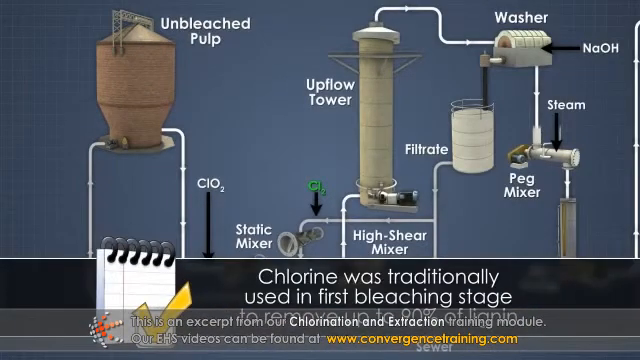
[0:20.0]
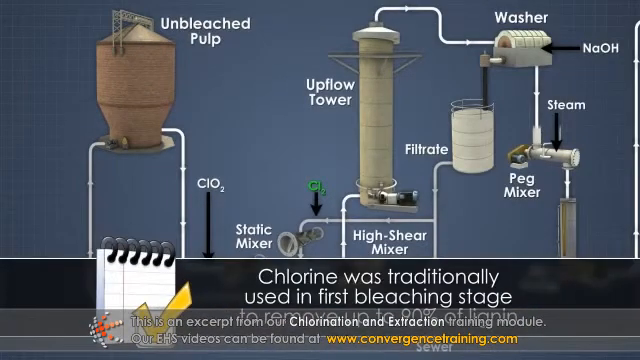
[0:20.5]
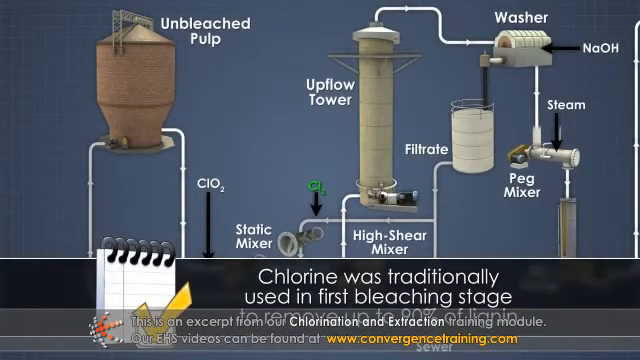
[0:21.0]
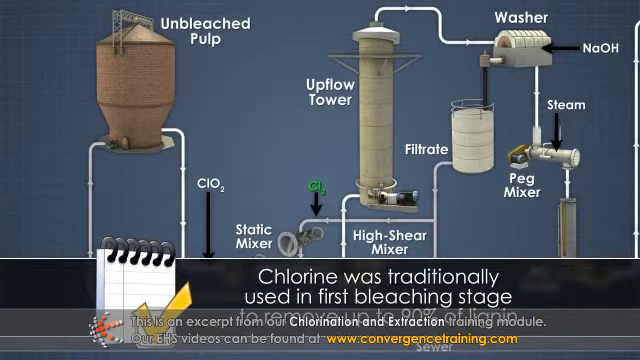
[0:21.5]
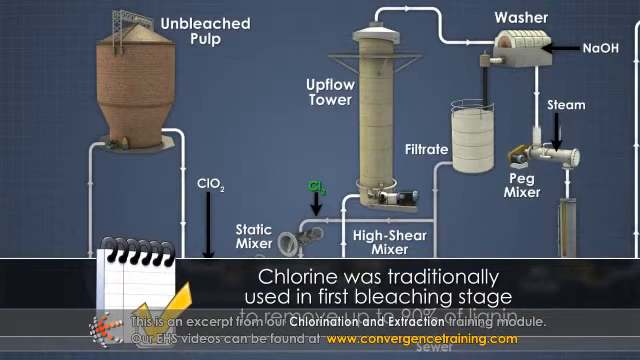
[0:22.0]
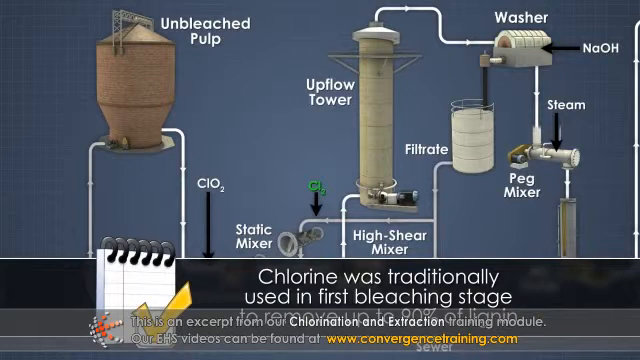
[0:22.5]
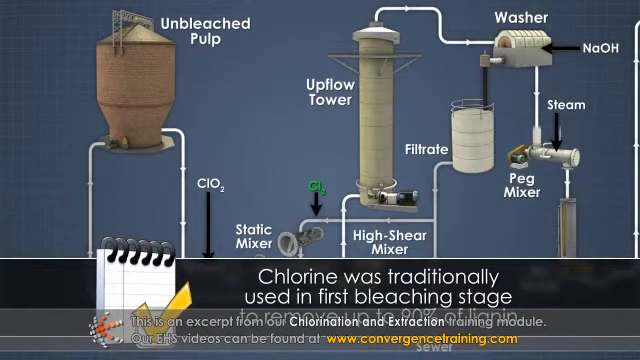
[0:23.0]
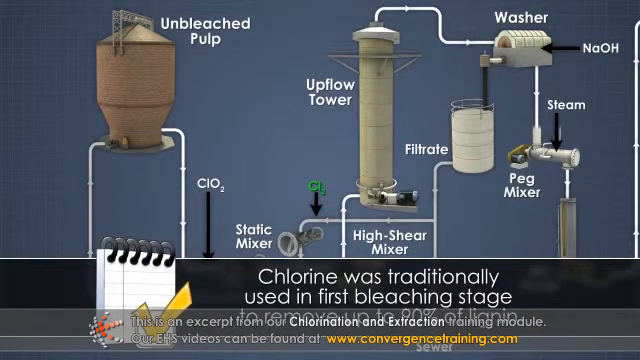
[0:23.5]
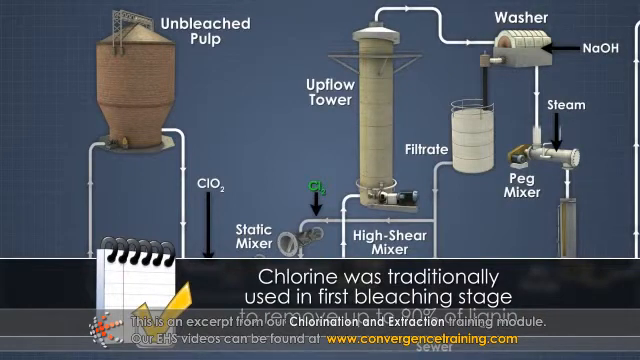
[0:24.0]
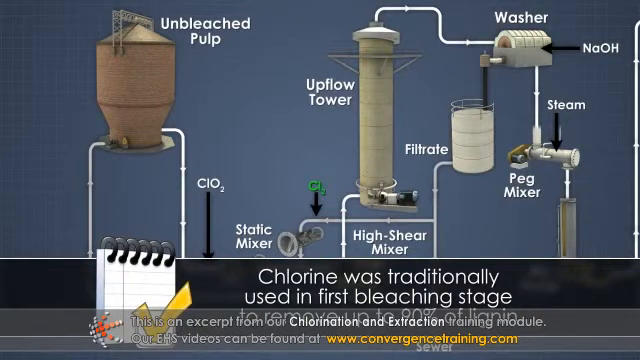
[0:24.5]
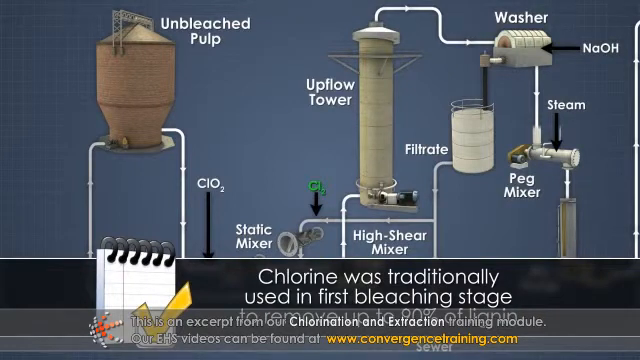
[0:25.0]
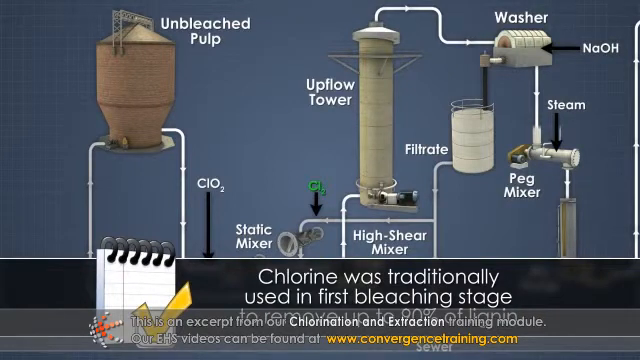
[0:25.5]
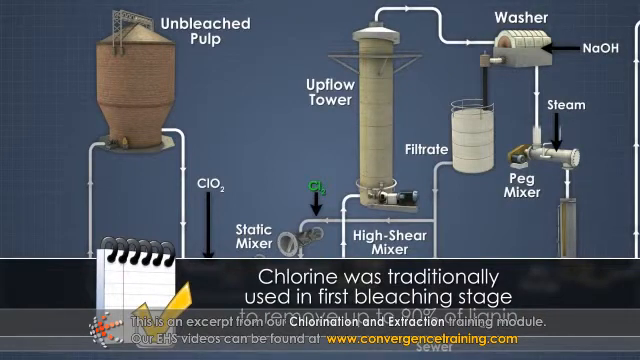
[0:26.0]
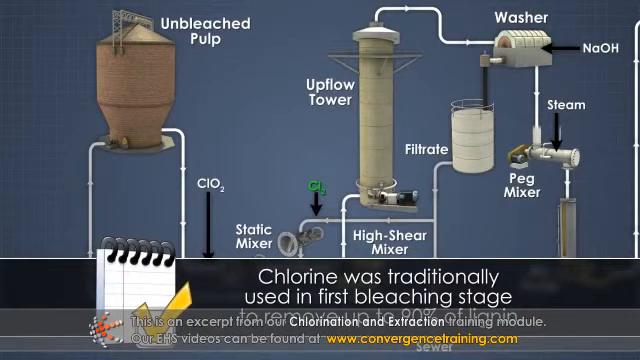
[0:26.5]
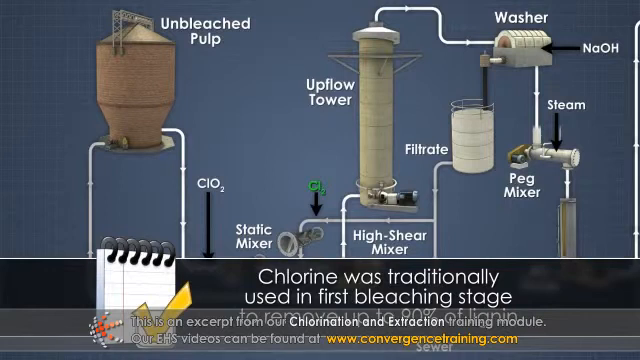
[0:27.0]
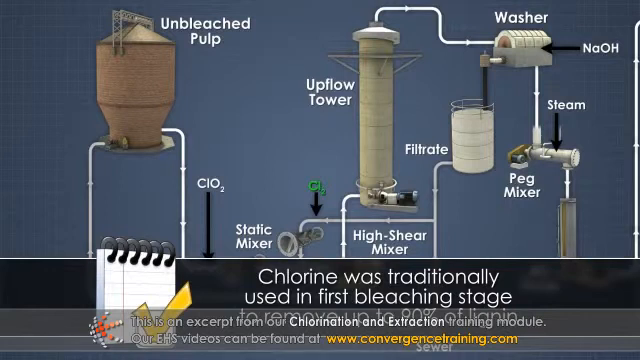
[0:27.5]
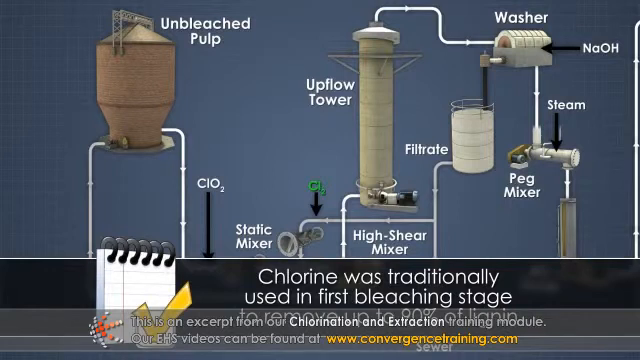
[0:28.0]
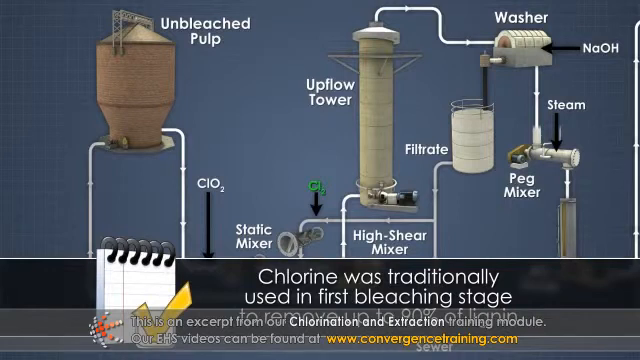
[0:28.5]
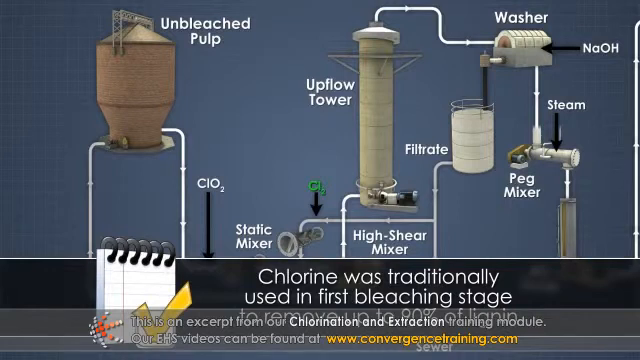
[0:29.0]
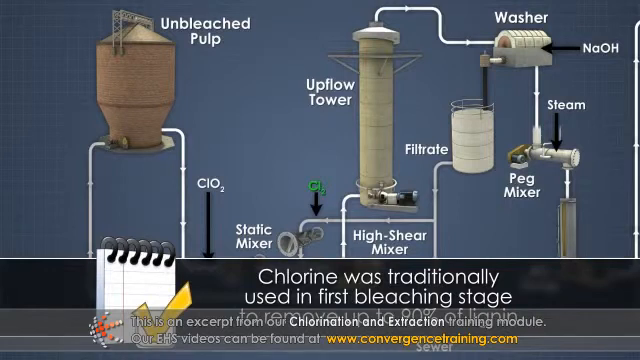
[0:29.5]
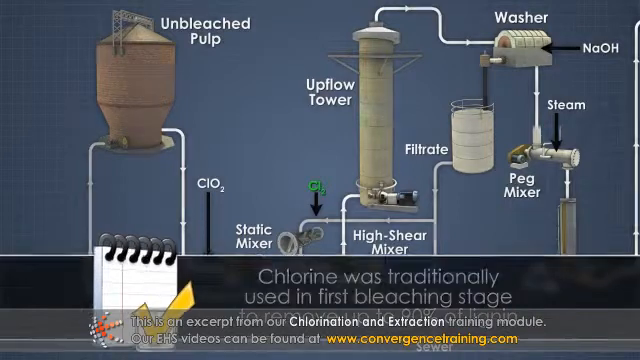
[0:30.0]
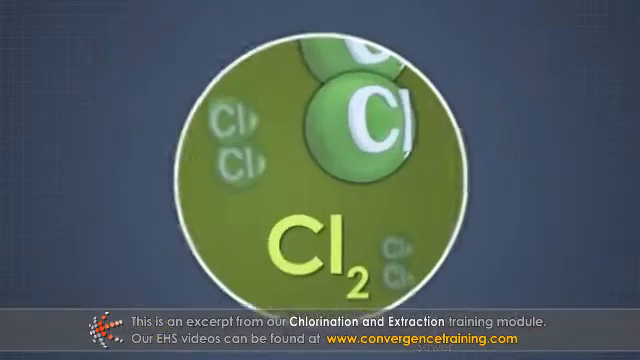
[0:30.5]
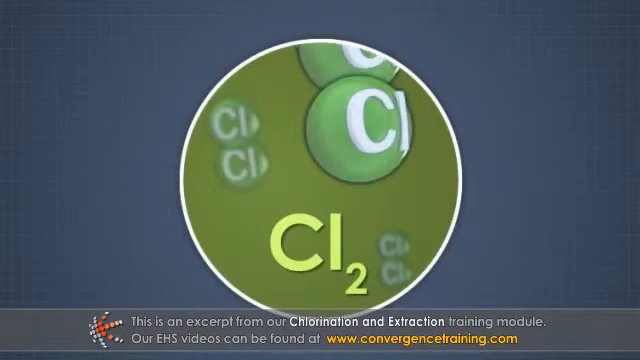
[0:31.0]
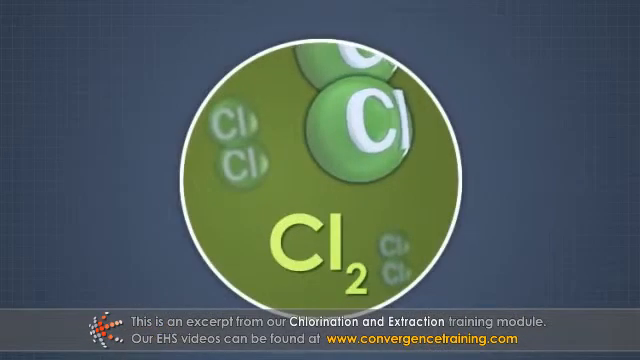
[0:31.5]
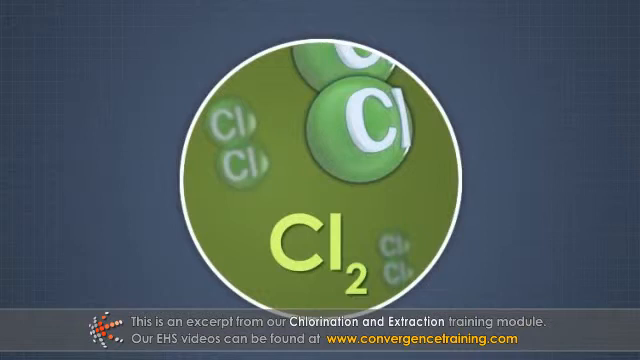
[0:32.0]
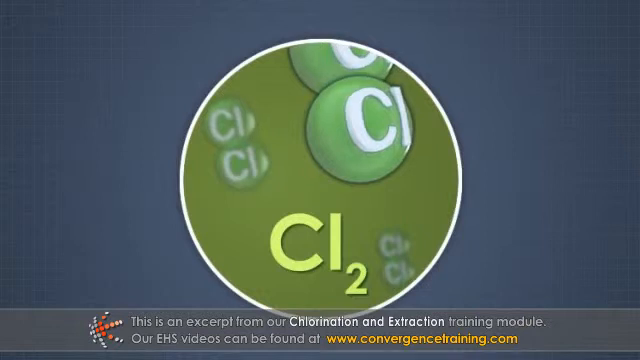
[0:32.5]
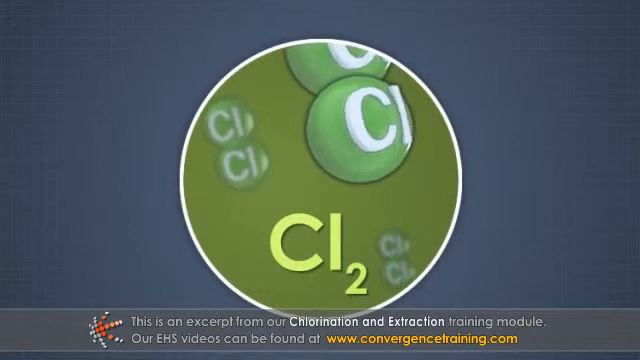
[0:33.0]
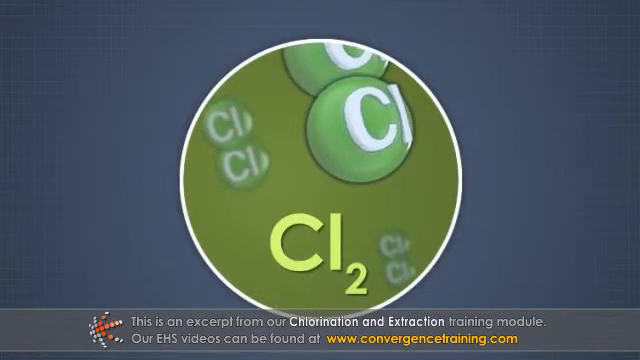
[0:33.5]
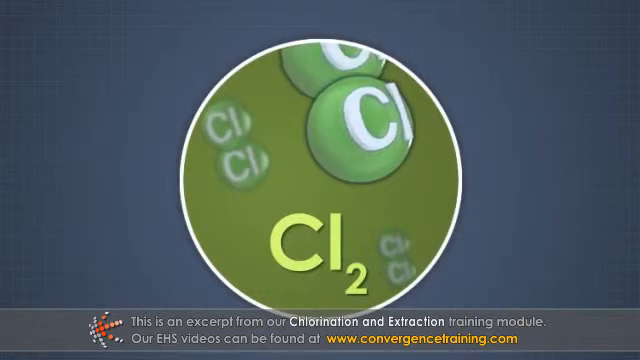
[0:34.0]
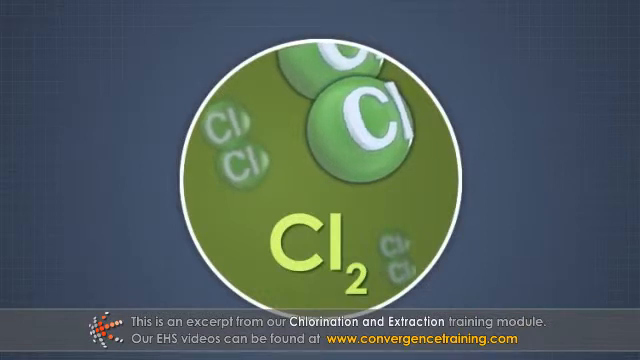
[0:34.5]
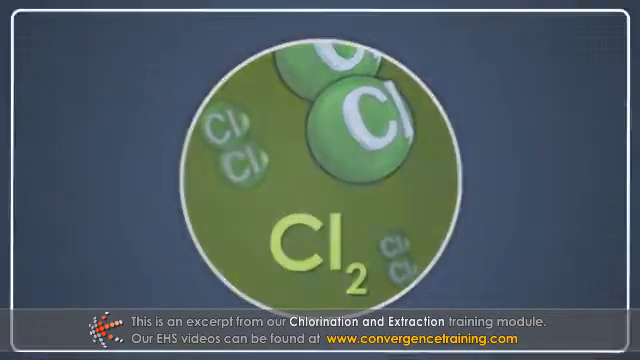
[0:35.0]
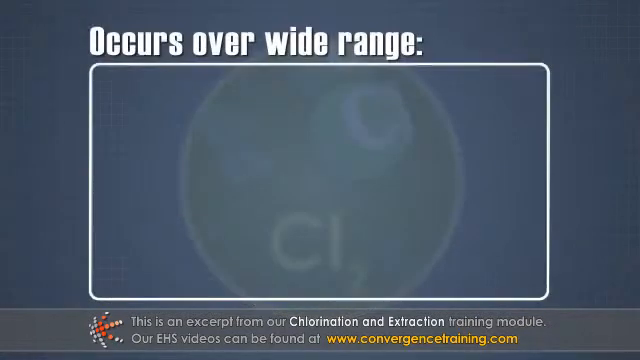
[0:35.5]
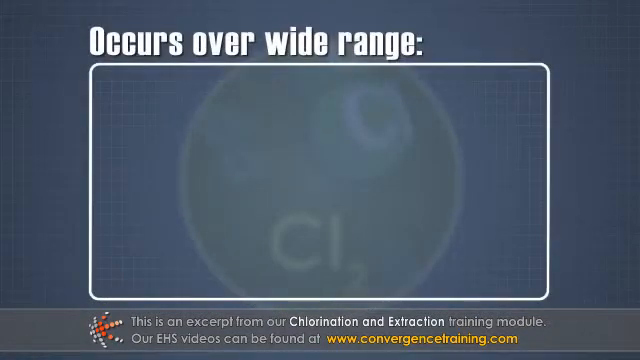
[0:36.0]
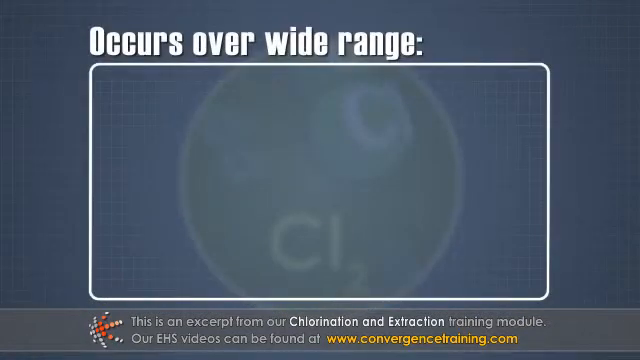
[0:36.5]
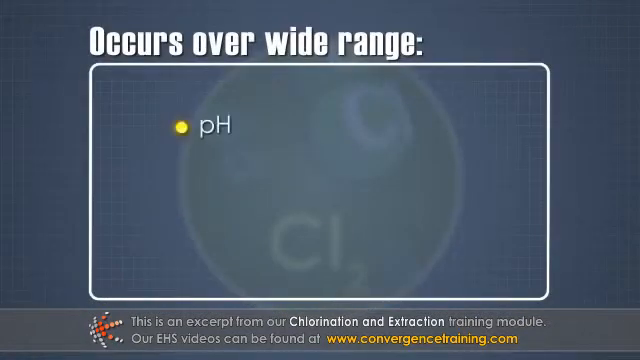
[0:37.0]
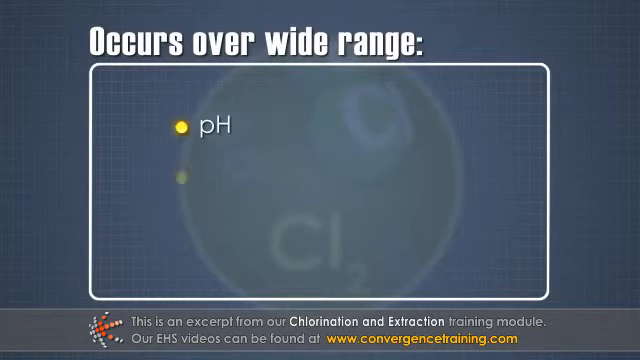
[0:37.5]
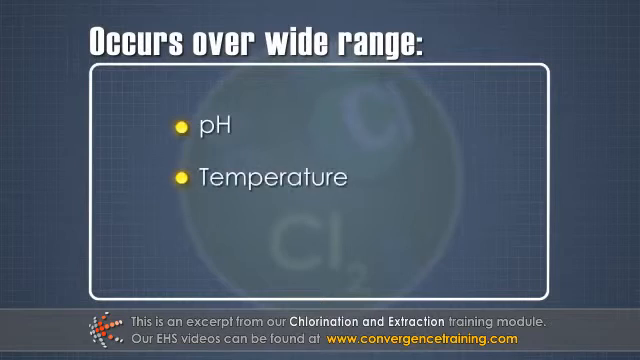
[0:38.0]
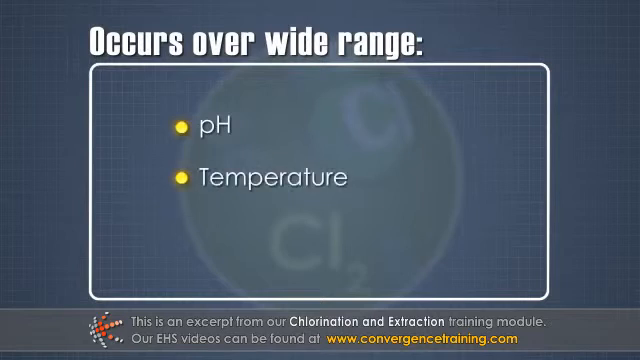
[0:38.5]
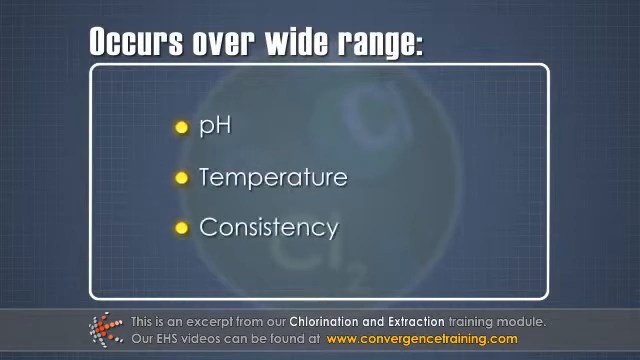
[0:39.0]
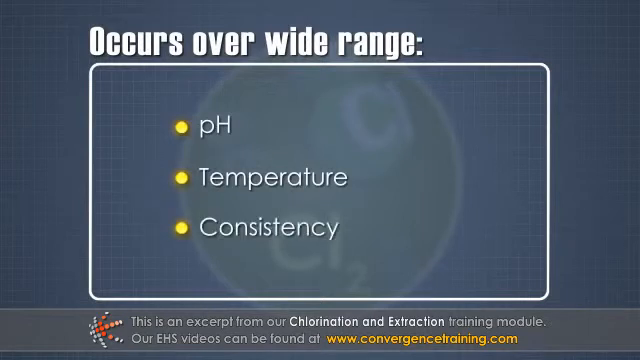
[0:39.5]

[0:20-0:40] A message appears reading "Chlorine was traditionally used in first bleaching stage to remove up to 90% of liquid". The caption at the bottom reads "This is an excerpt from our chlorination extraction training module. Our EHS videos can be found at www.convergencetraining.com". The video transitions to a brief view of chlorine in a green circle, then to a bulleted list titled "Occurs over wide ranges", with pH, temperature and consistency as the parameters in yellow bullets. The blue background is squared, with squares that appear very briefly drawn, giving it a texture and an industrial look.